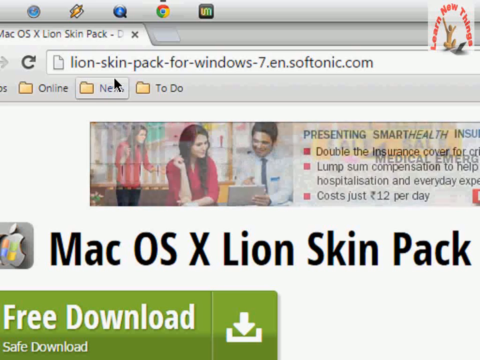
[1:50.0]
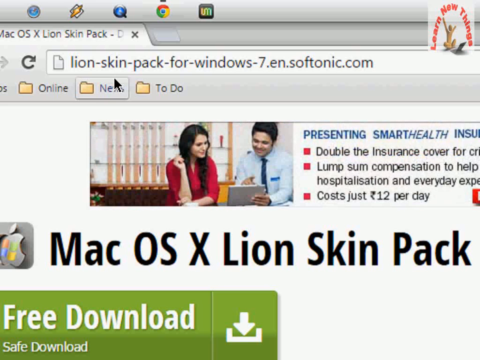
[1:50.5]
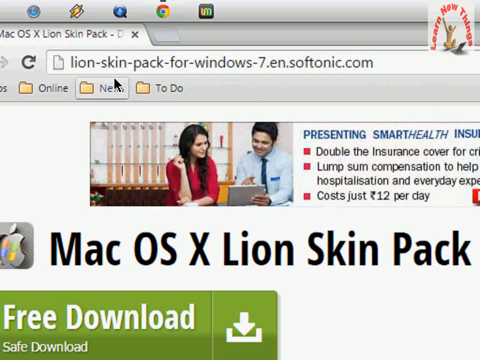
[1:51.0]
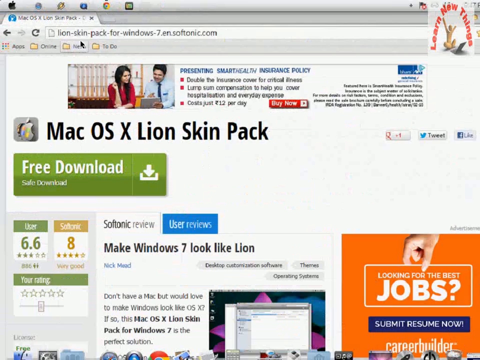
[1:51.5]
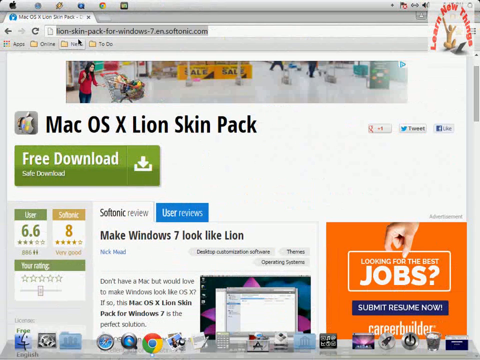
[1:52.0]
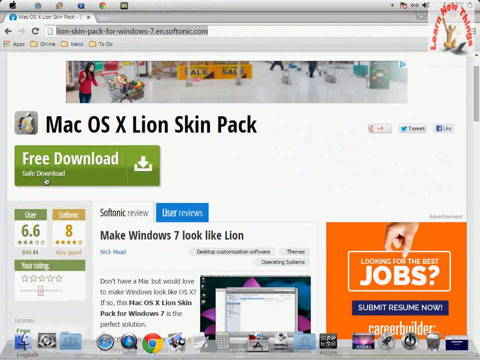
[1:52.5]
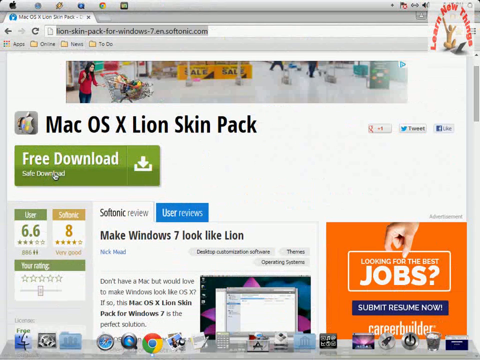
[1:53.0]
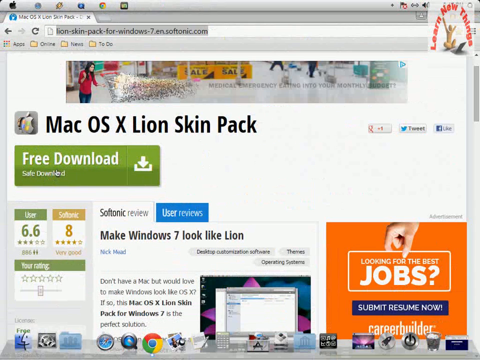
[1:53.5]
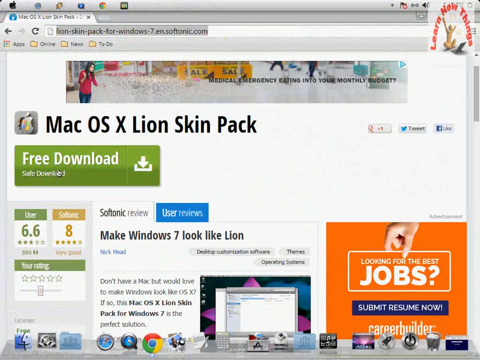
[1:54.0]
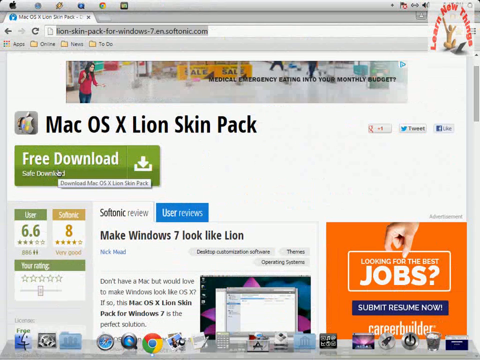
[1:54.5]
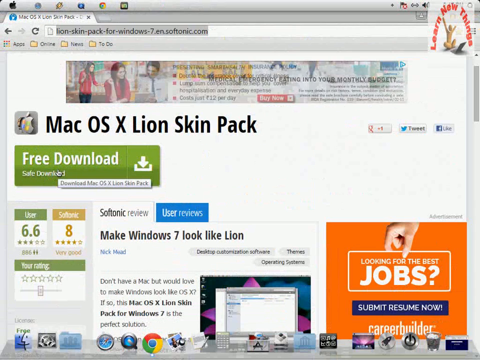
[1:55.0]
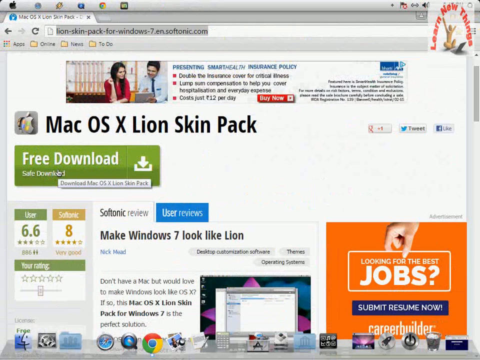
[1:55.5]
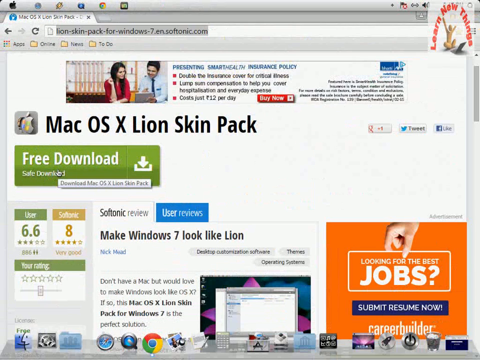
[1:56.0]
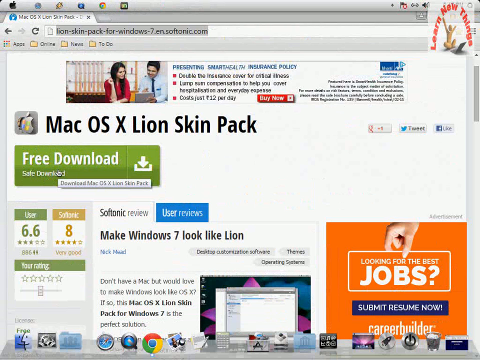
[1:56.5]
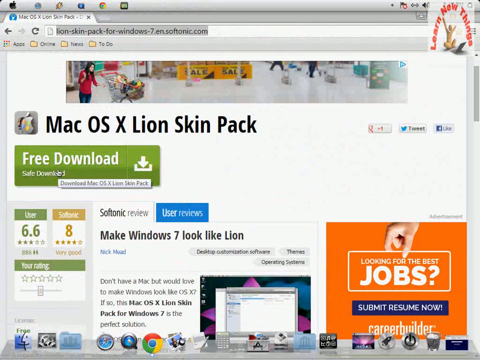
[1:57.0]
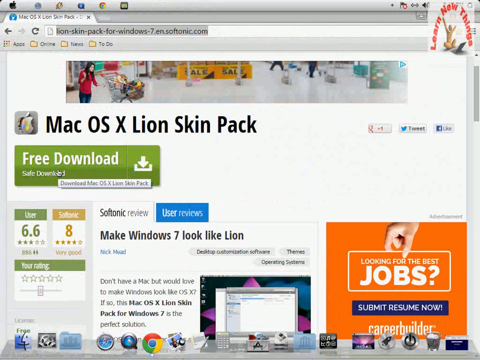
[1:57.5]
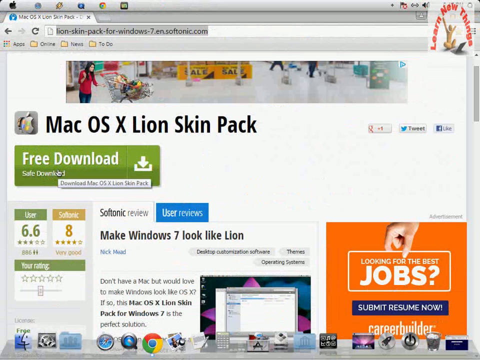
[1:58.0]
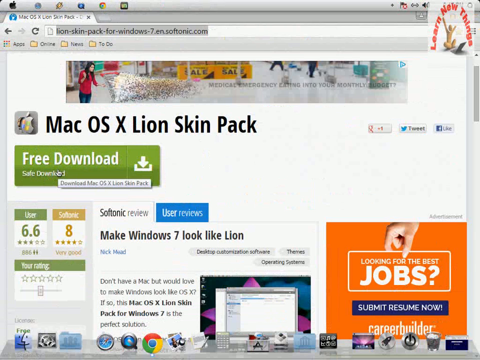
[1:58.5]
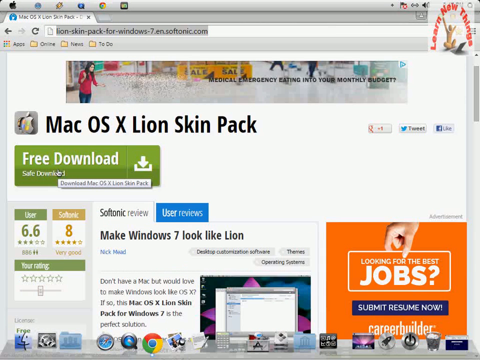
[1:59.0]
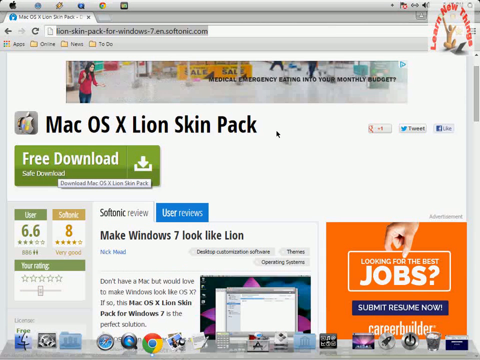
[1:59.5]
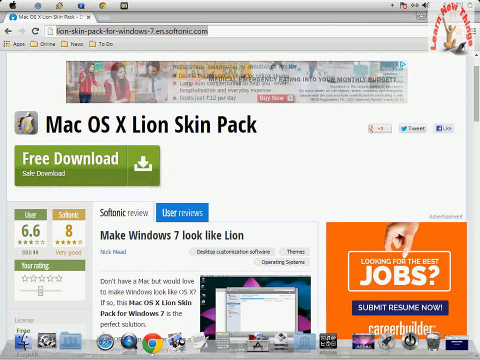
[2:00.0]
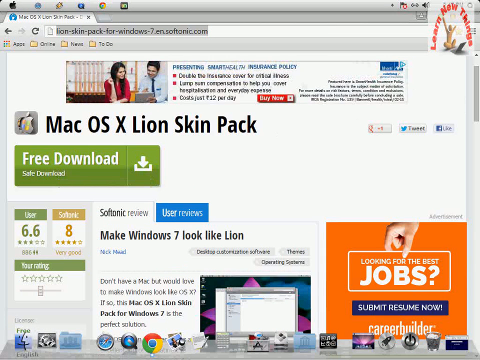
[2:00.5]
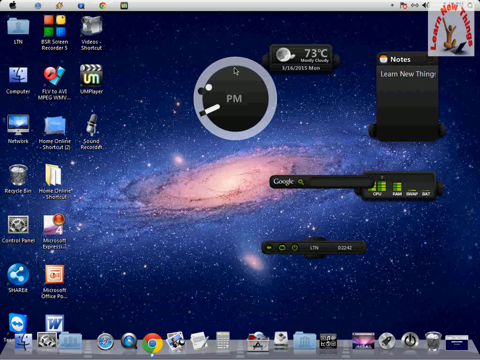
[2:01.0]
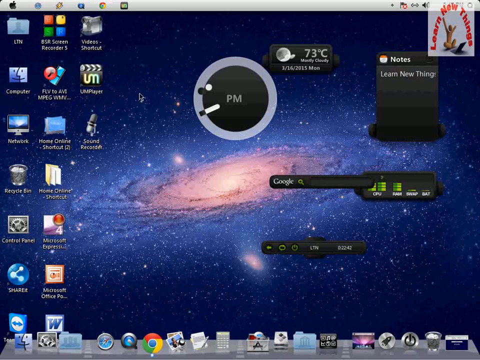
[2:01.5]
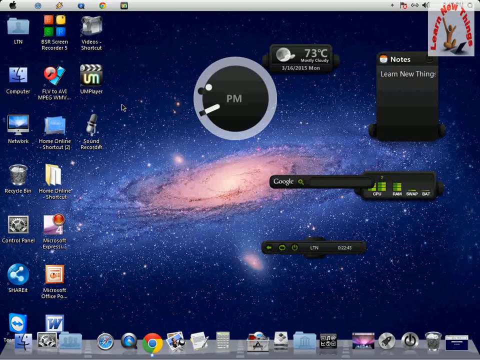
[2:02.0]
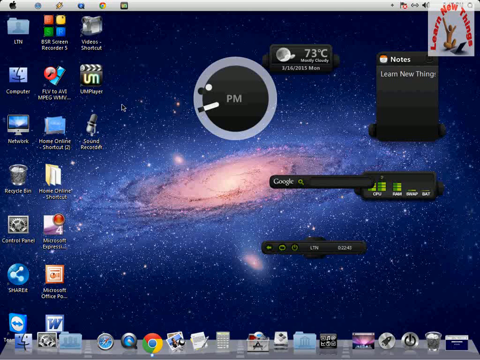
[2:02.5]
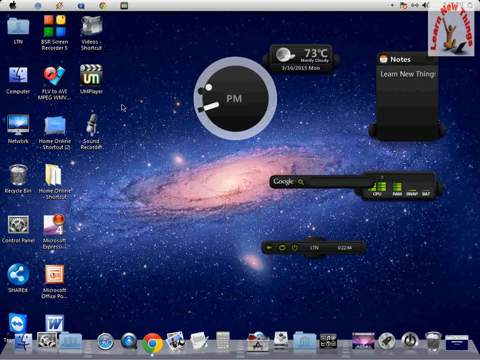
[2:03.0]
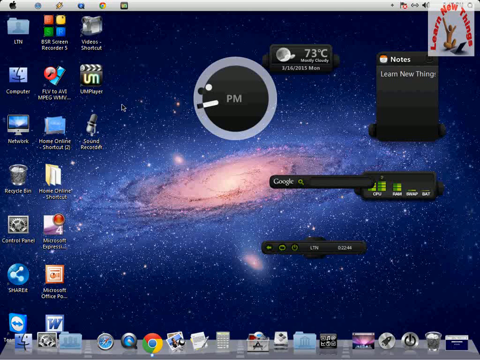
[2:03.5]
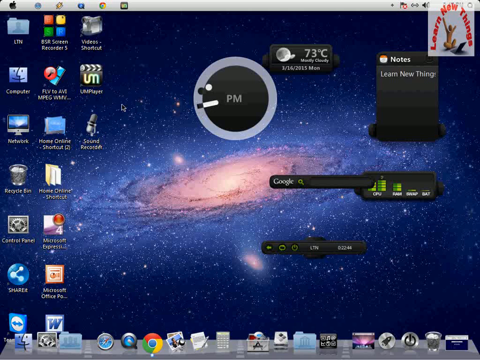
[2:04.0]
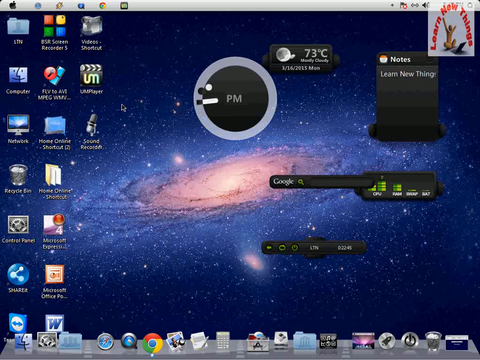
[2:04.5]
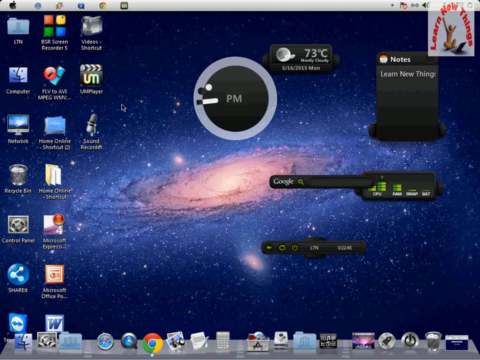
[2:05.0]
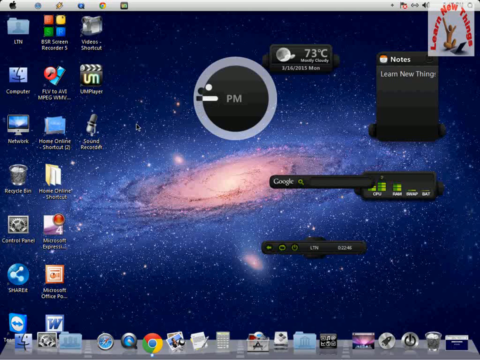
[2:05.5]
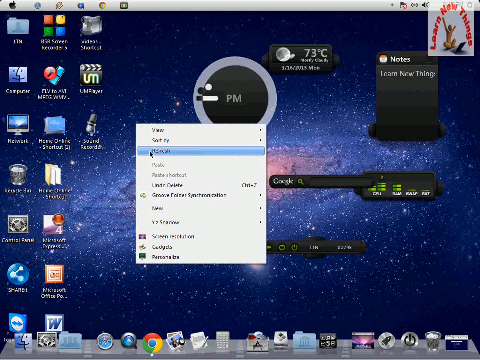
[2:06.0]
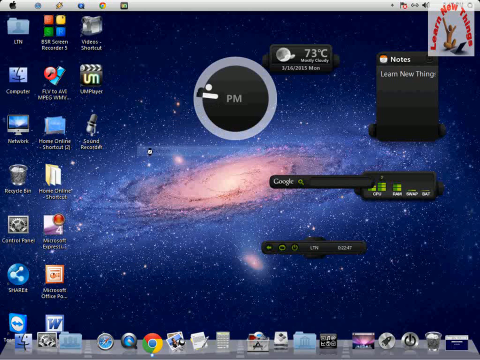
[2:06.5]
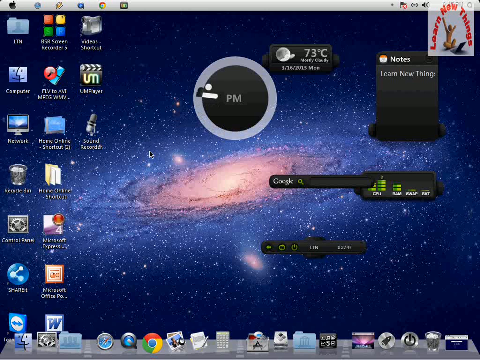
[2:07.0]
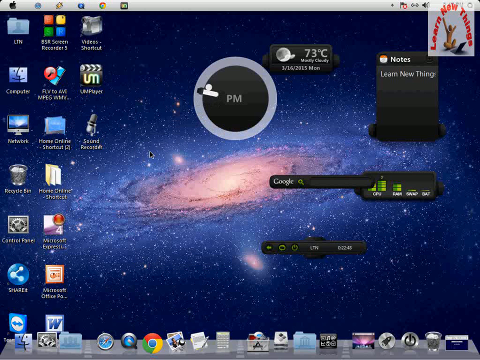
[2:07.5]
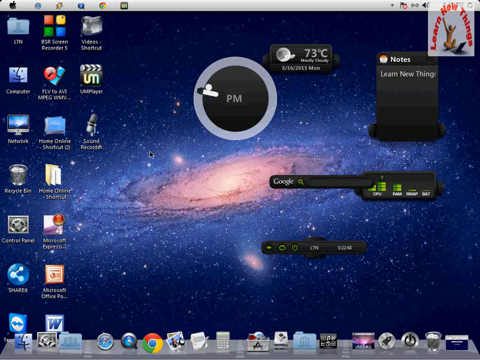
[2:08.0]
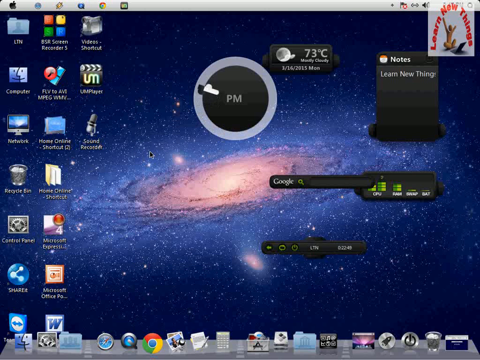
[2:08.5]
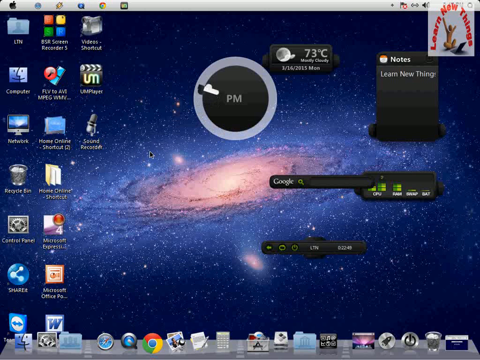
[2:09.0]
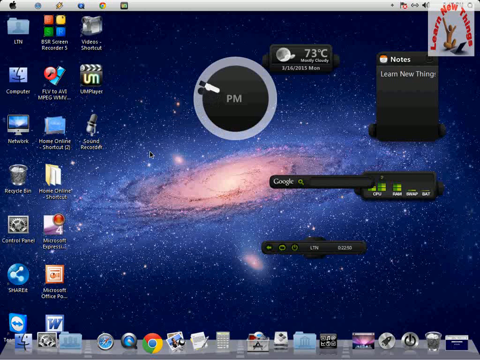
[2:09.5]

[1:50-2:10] The browser still shows "lion-skin-pack-4-windows-7.en.softonic.com". Text reading "presenting smart health double the insurance cover" and "just 12 dollars a day" appears, apparently an advertisement. The page says "mac os x lion skin pack". The person makes the window smaller and hovers over the area that says "free download", and then the image disappears.